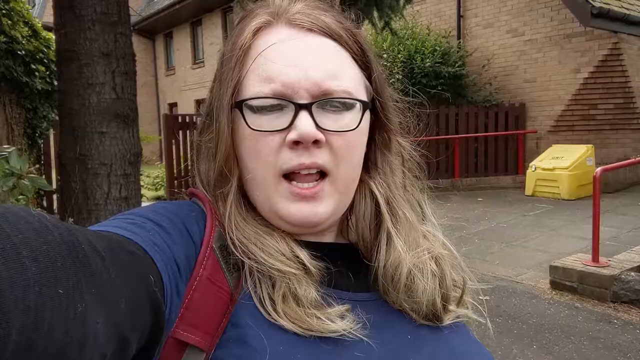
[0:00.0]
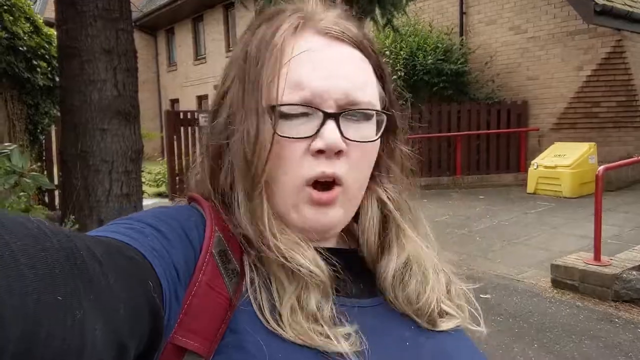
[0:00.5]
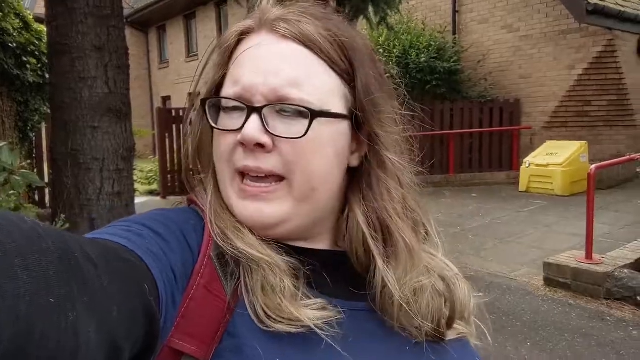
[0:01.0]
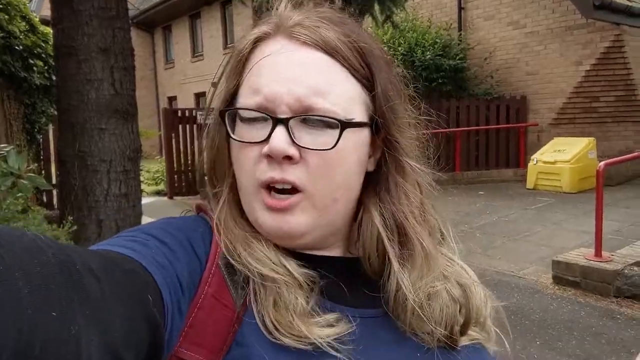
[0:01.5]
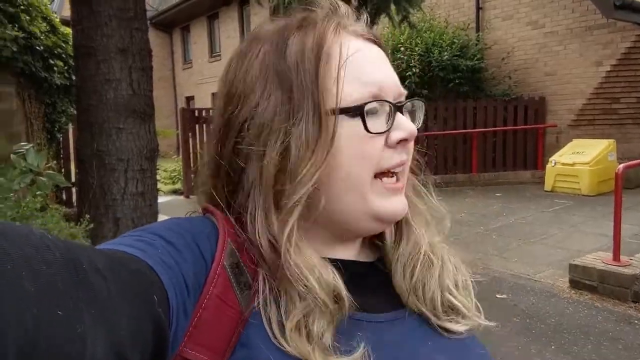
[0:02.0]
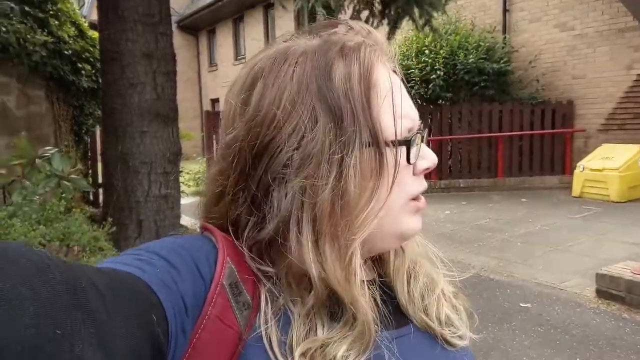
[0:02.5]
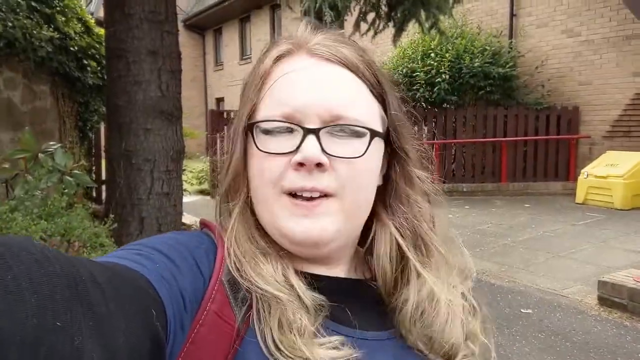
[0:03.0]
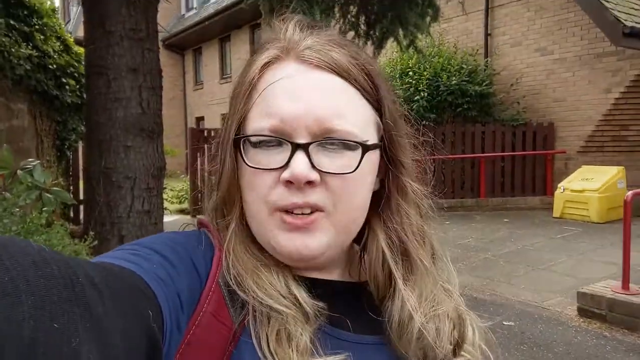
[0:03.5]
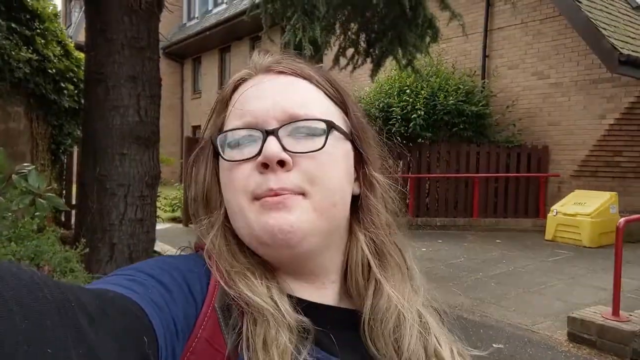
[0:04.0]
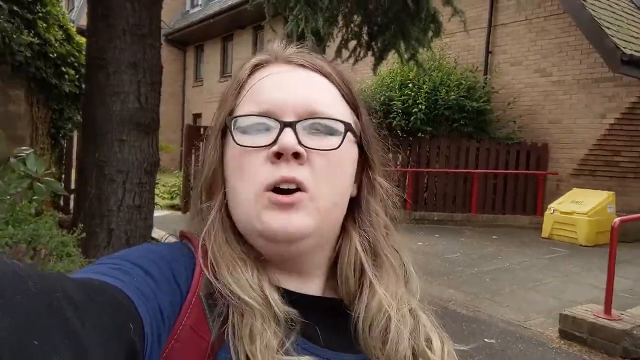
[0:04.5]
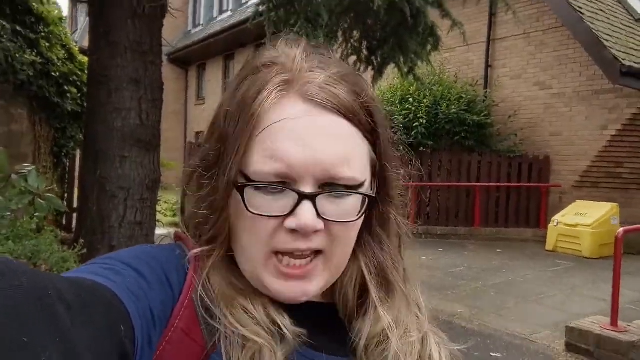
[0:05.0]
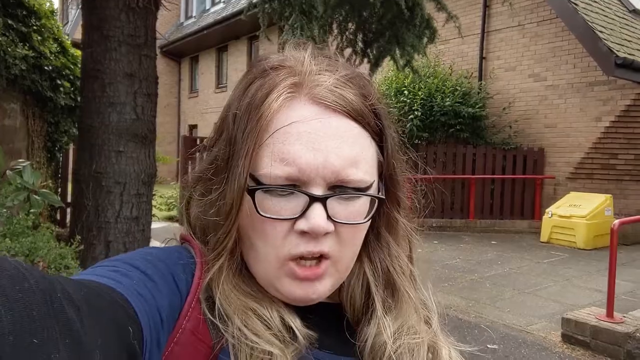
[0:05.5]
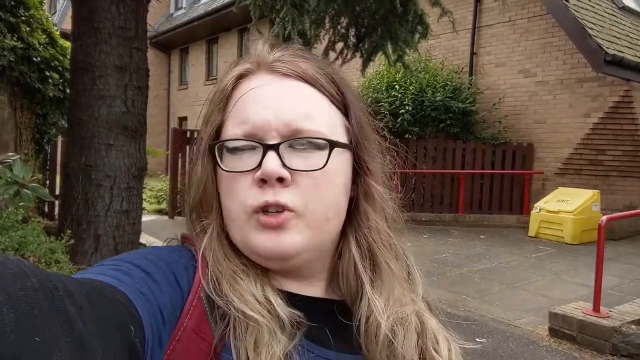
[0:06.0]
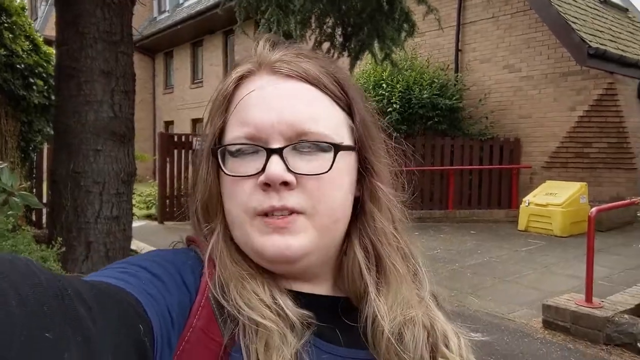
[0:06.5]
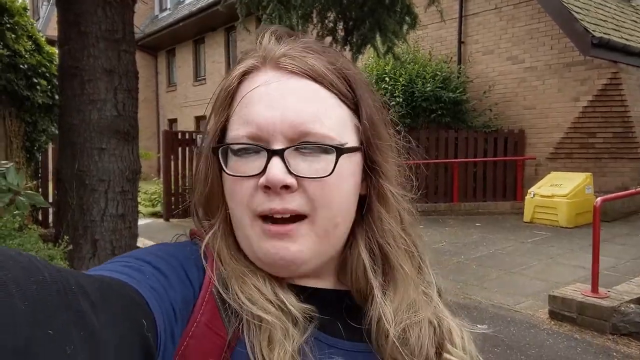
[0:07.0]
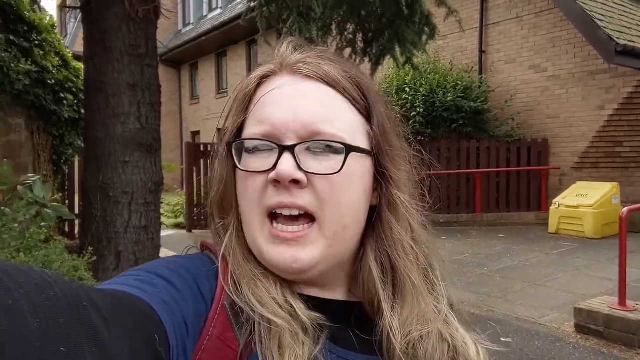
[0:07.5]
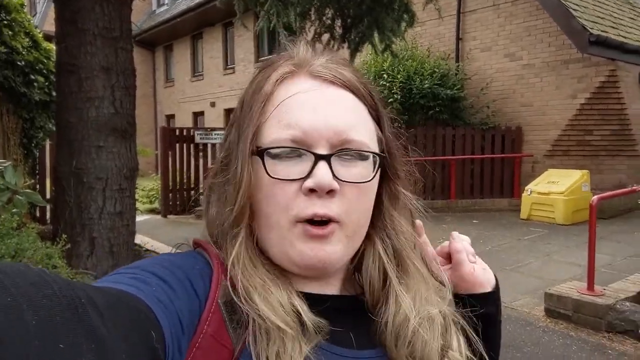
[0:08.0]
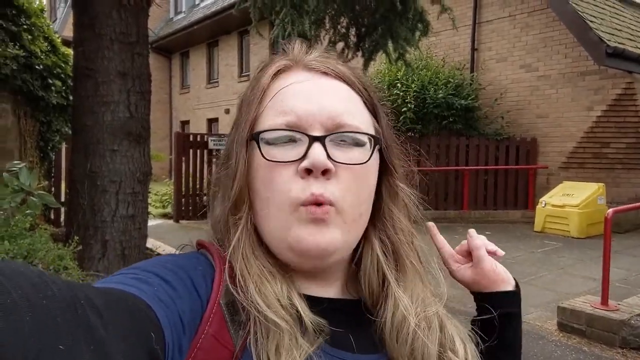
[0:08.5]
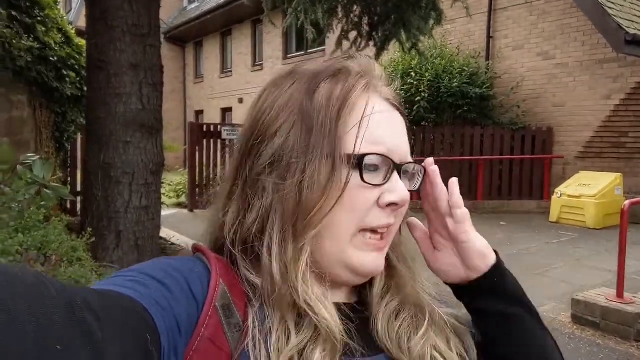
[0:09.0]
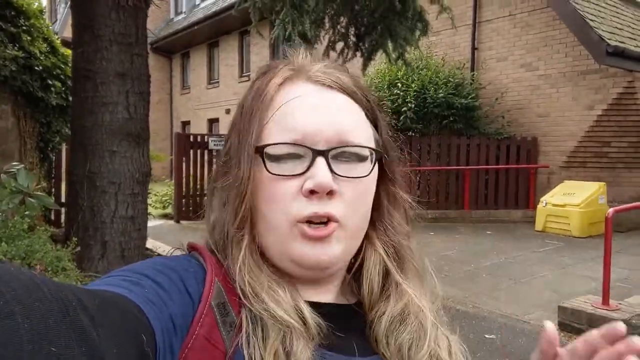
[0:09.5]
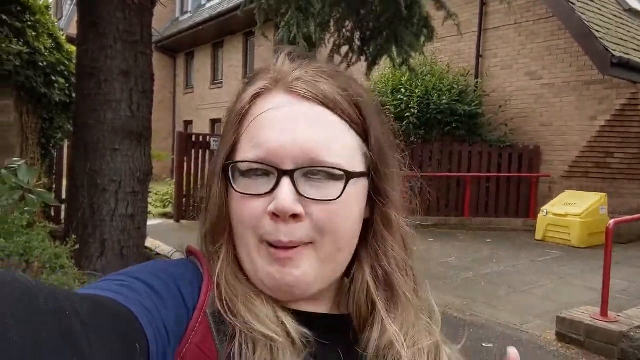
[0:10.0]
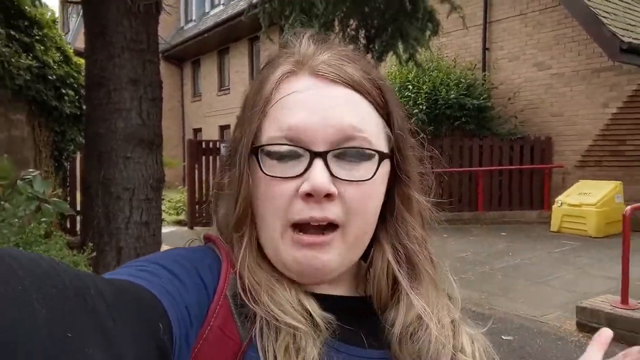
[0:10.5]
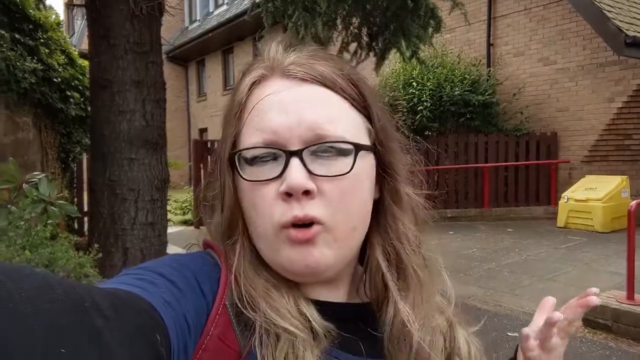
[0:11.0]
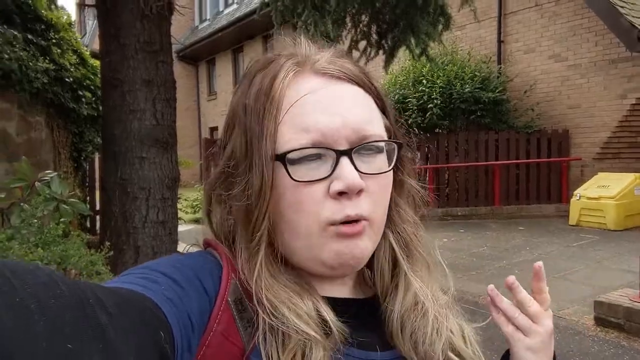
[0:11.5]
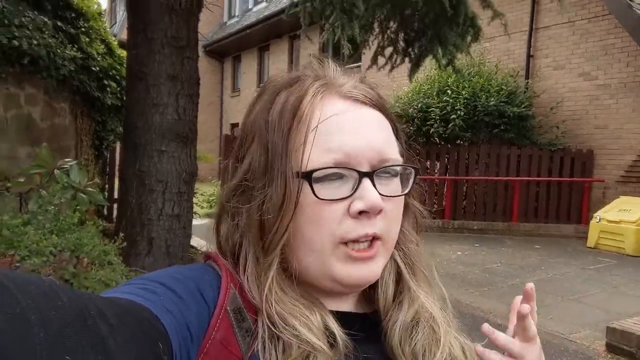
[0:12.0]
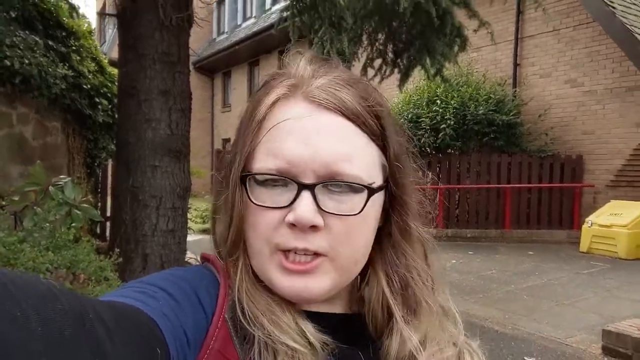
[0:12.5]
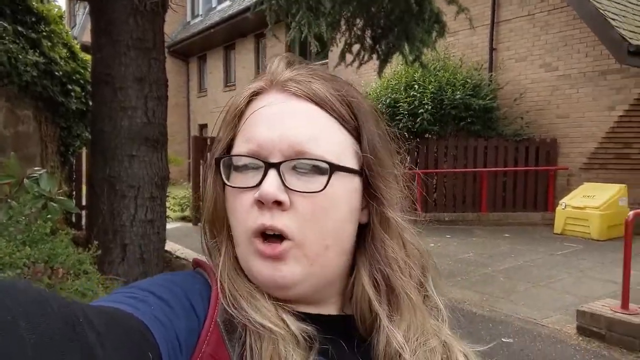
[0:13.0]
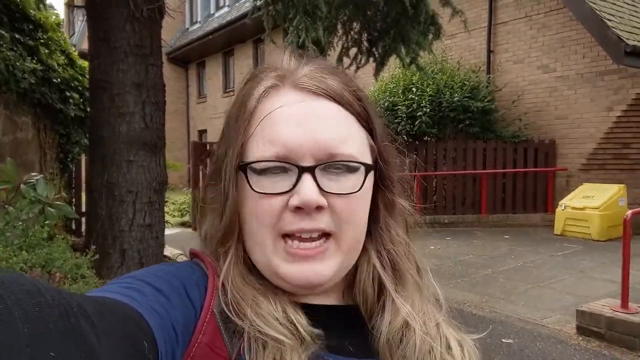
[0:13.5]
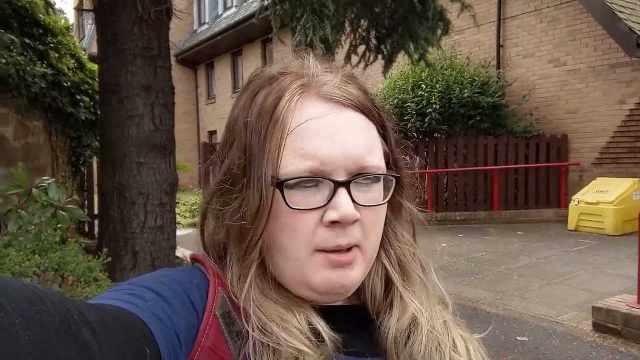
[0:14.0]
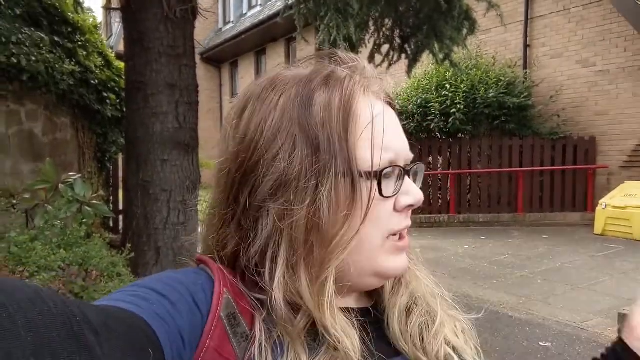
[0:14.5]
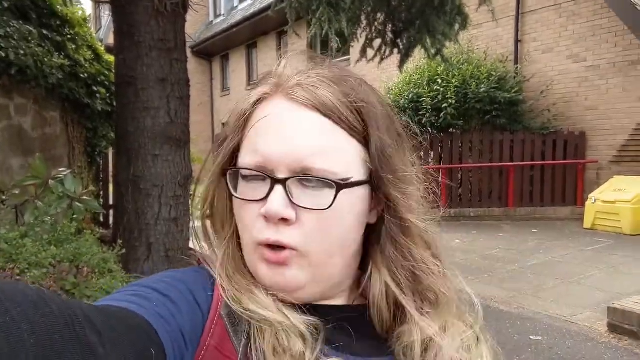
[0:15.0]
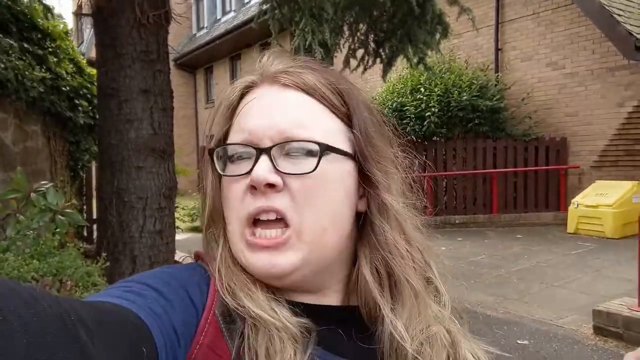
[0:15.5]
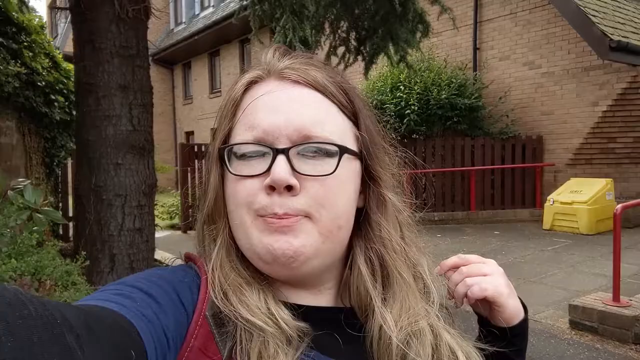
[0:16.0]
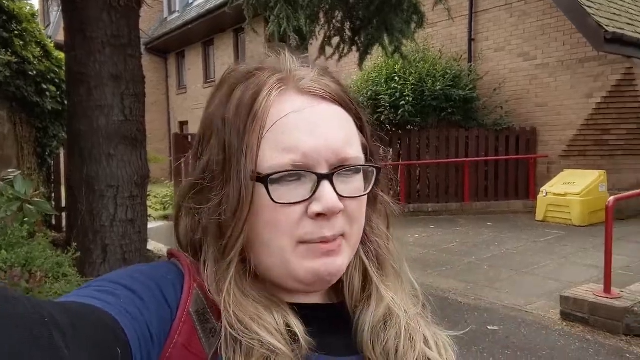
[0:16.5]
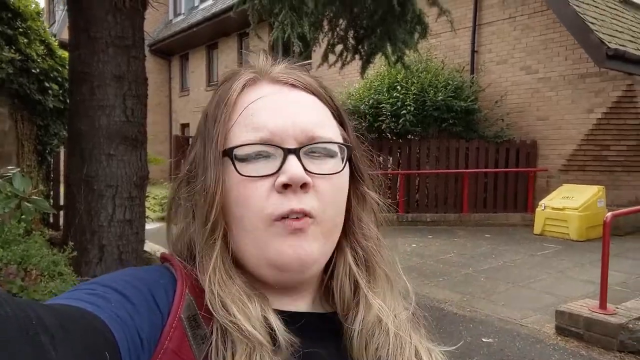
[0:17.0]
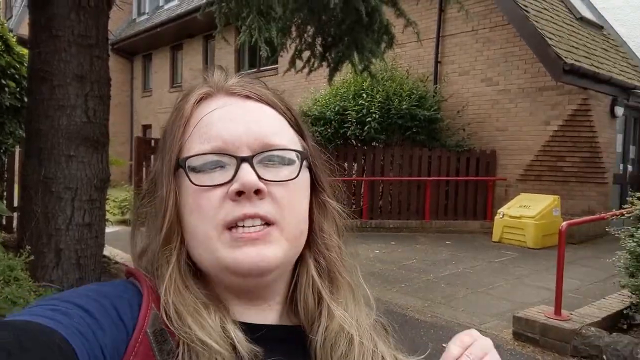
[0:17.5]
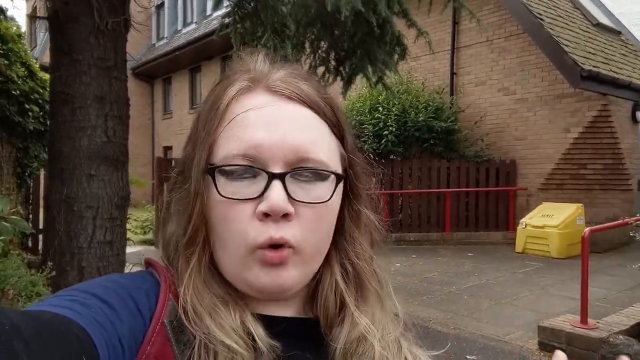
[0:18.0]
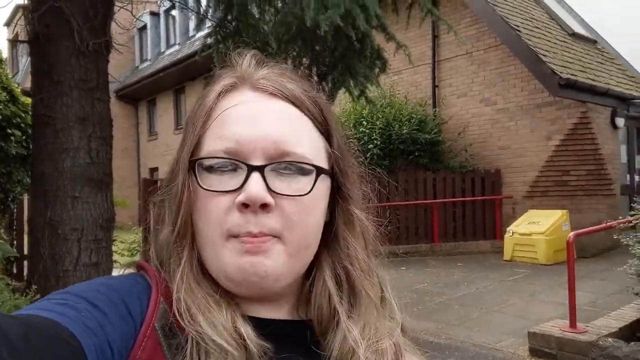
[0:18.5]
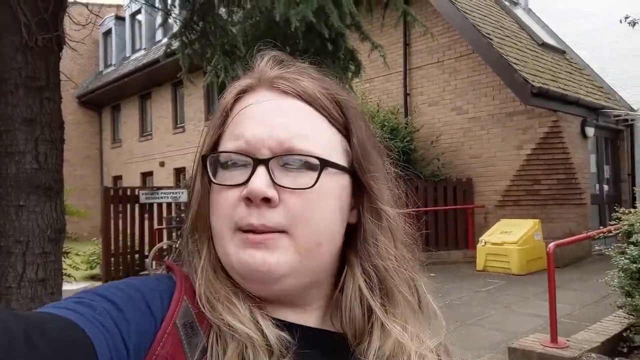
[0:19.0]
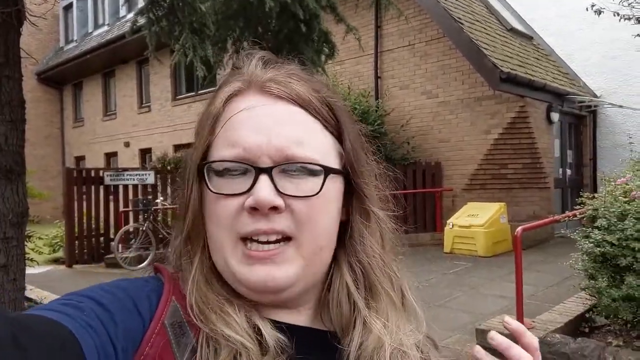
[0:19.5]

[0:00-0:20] A fair-haired woman stands in the paved courtyard of an apartment block, beneath a tree, with the low-rise brick apartments behind her. She wears glasses that do not fit her particularly well, and a black long-sleeve t-shirt with a blue t-shirt over the top of it. Her eyes are hard to make out, but she is concerned about something and talks expressively, making a point. The video appears to be filmed by her pointing a phone at herself, like a video selfie. The area is quiet. A doorway is visible behind her to the right, along with a salt bin and handrails. No one else is seen outside.